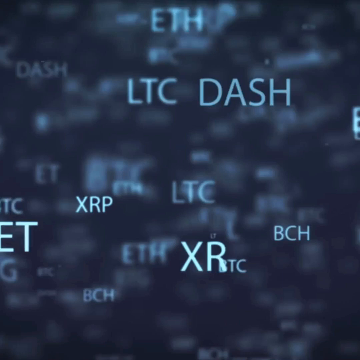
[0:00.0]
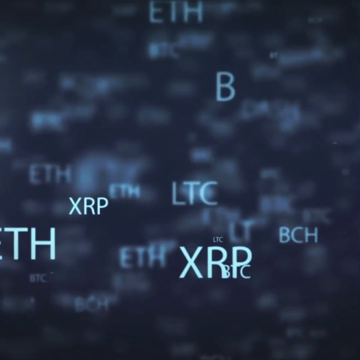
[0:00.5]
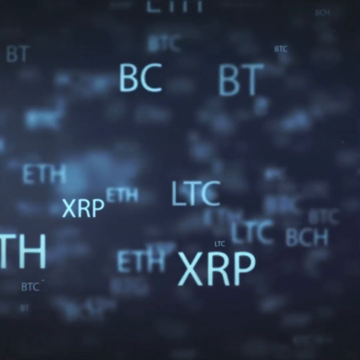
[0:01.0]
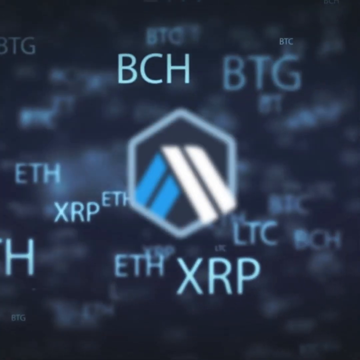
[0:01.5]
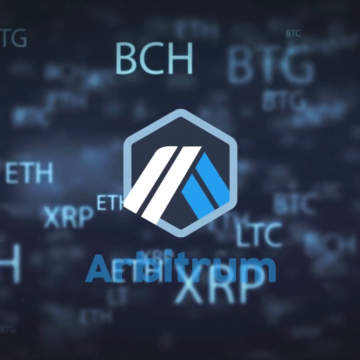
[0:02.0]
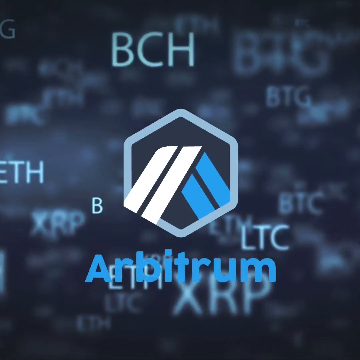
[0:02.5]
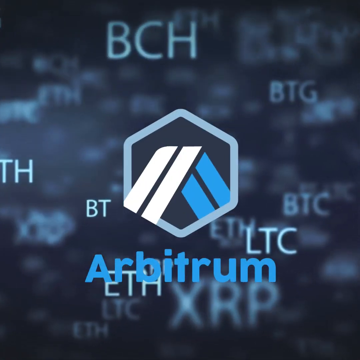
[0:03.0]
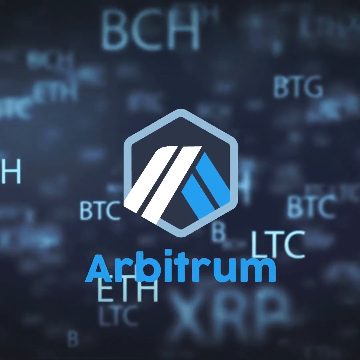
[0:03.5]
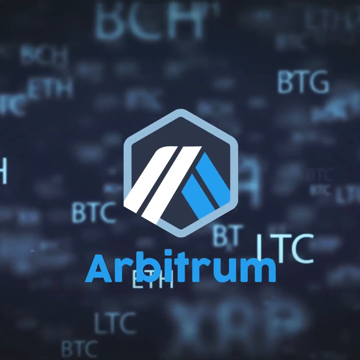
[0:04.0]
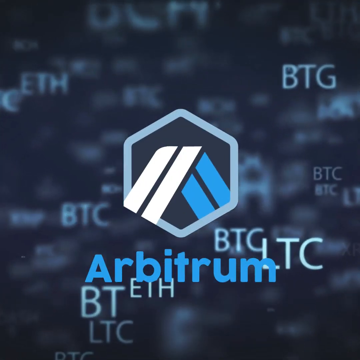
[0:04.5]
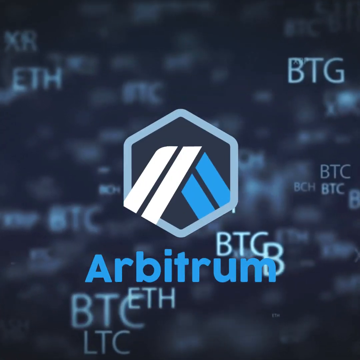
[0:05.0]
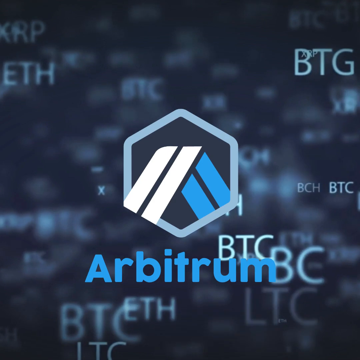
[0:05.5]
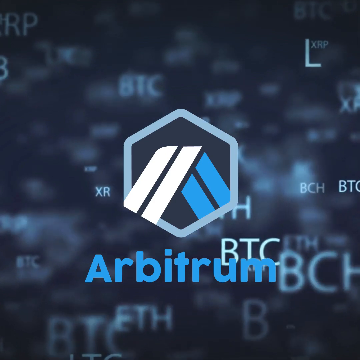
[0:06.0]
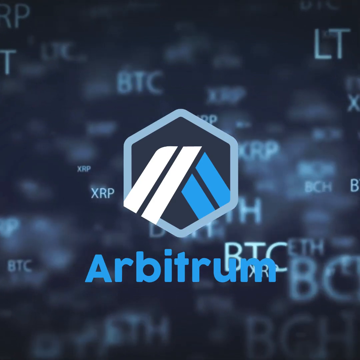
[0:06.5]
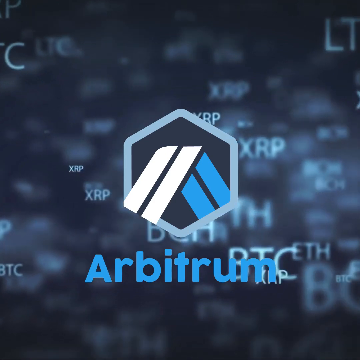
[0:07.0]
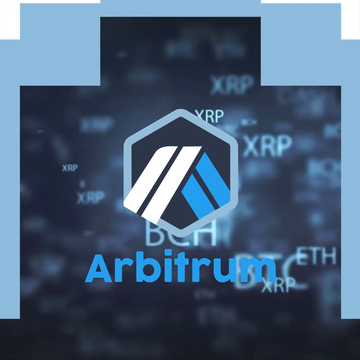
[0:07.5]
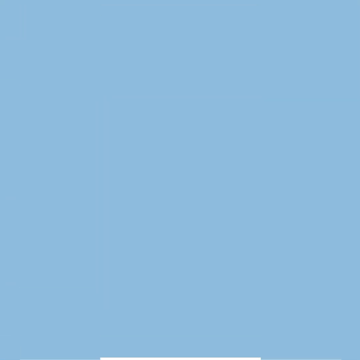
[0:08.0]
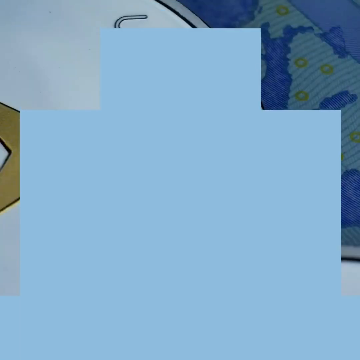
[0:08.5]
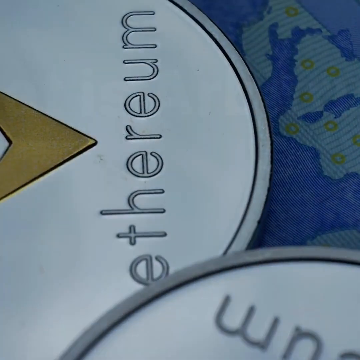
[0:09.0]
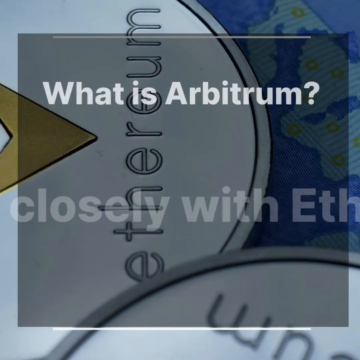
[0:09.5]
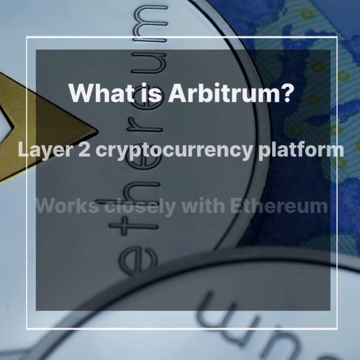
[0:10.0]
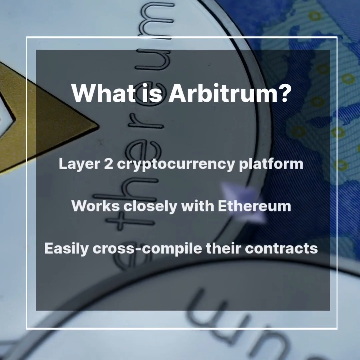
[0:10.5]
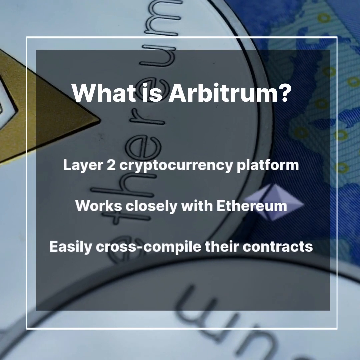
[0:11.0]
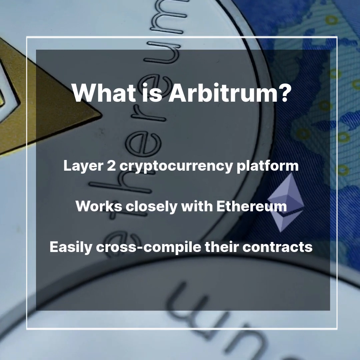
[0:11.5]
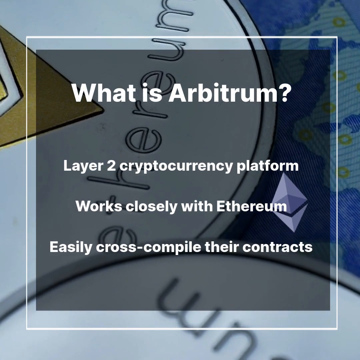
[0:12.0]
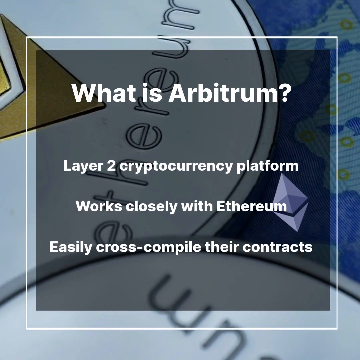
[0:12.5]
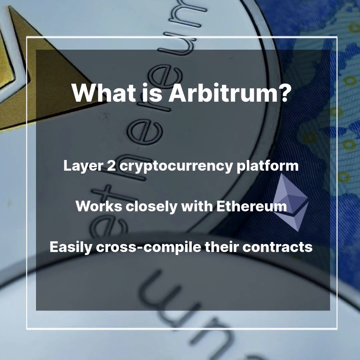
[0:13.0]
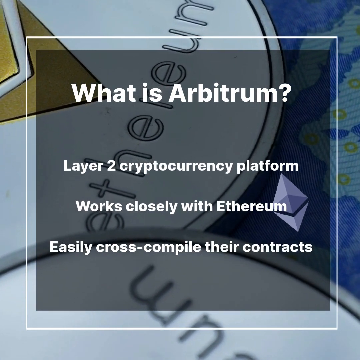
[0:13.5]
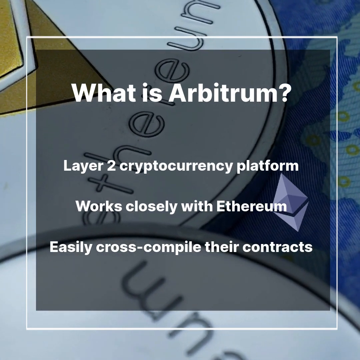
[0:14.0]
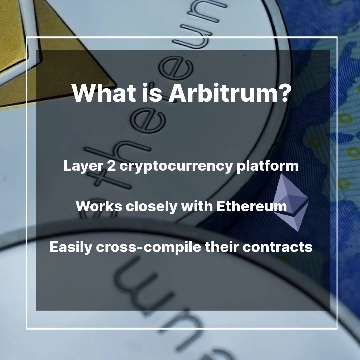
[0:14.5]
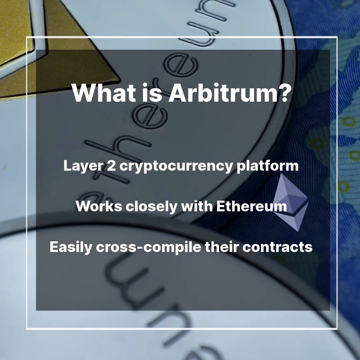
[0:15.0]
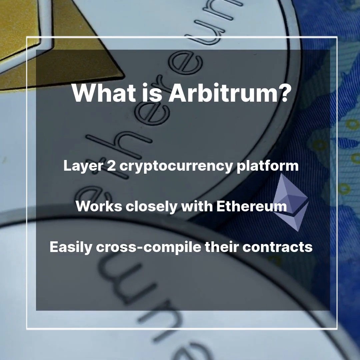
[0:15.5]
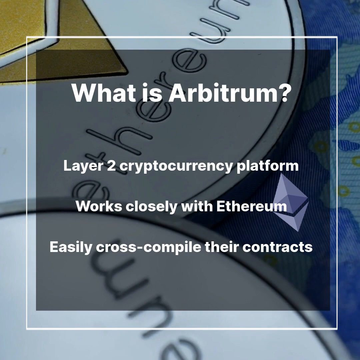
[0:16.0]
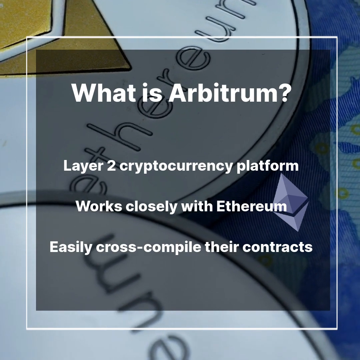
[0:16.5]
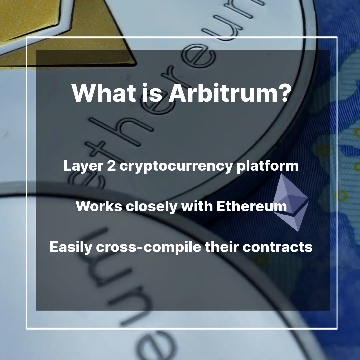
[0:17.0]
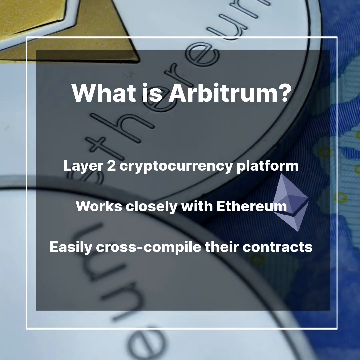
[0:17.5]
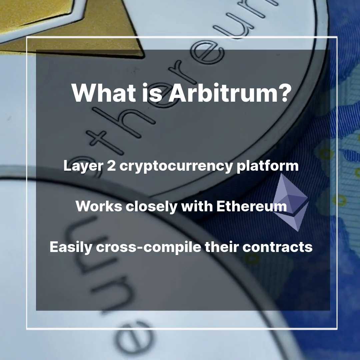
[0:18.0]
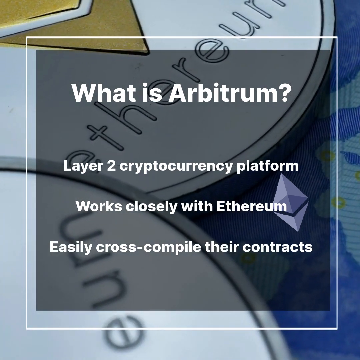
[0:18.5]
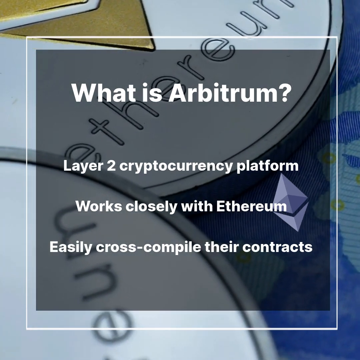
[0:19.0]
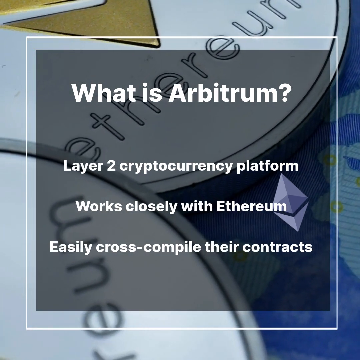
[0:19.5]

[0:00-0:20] Text about LTC appears alongside a symbol, and a lot of different letters such as BTC surround a symbol in the middle. Blue letters and words pop up on the screen, fading in and out. The name "Arbitrum" appears, followed by the text "What is Arbitrum? Layer 2 cryptocurrency platform works closely with Ethereum. Easily cross-compile their contracts." In the background, a spinning coin says "Ethereum".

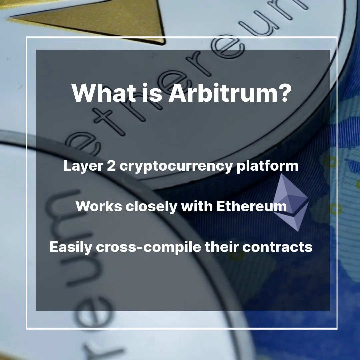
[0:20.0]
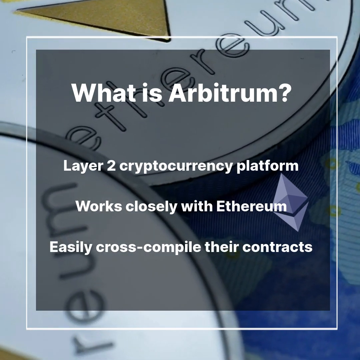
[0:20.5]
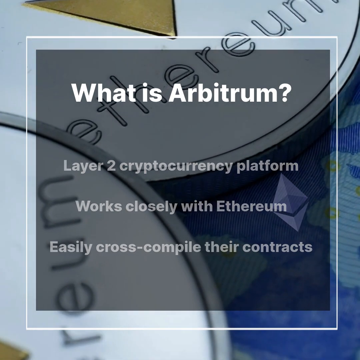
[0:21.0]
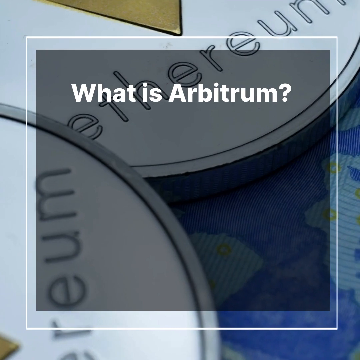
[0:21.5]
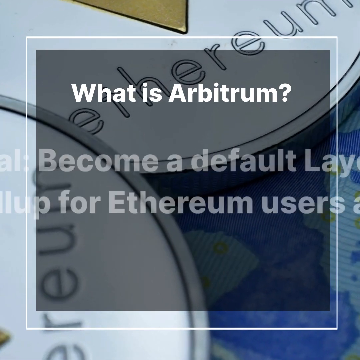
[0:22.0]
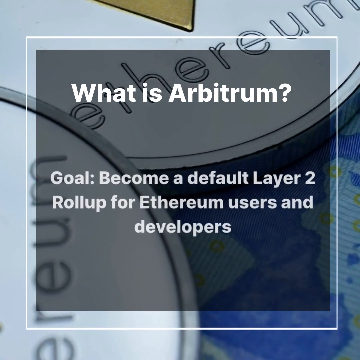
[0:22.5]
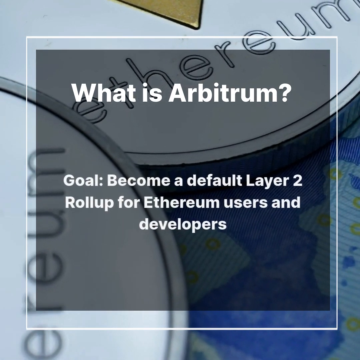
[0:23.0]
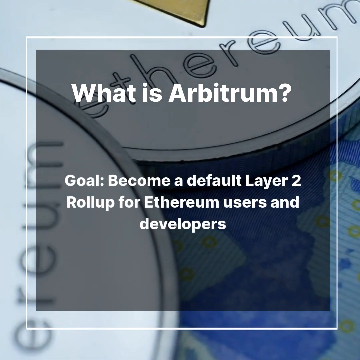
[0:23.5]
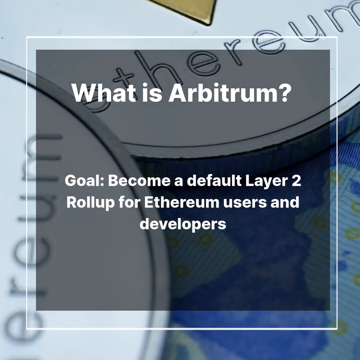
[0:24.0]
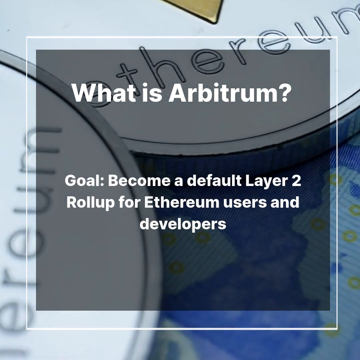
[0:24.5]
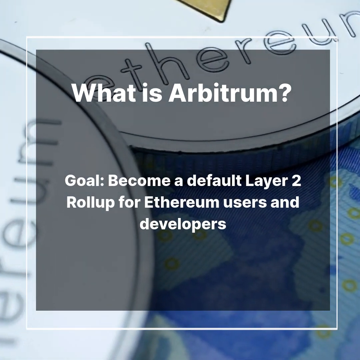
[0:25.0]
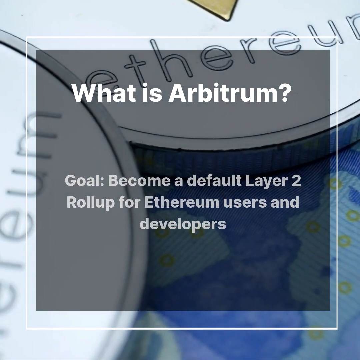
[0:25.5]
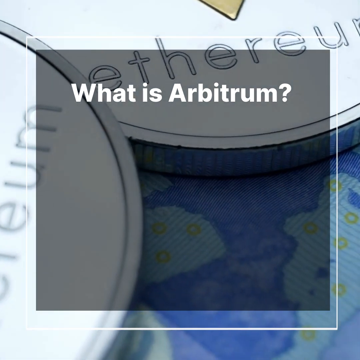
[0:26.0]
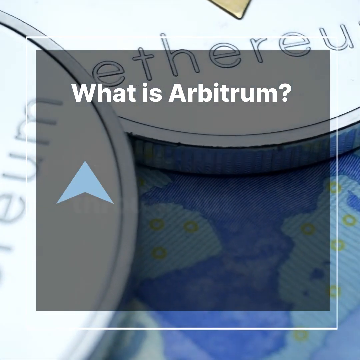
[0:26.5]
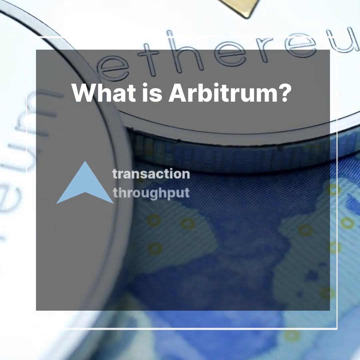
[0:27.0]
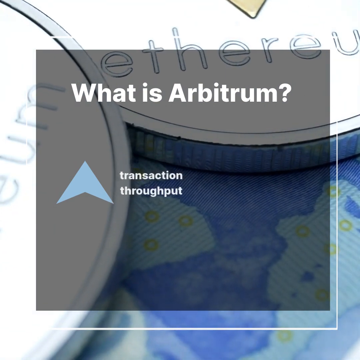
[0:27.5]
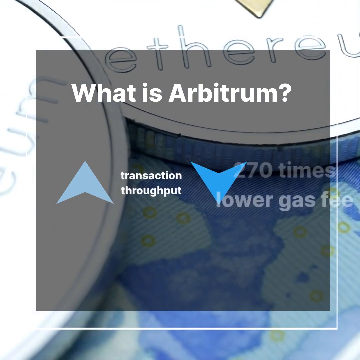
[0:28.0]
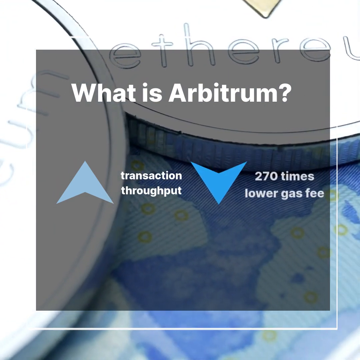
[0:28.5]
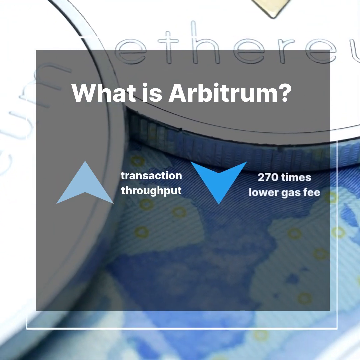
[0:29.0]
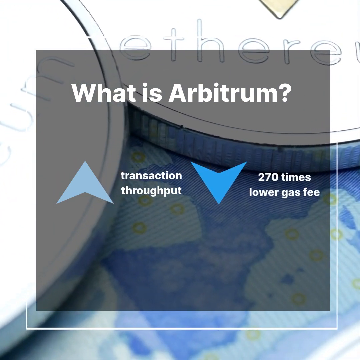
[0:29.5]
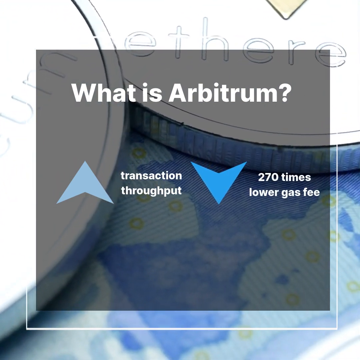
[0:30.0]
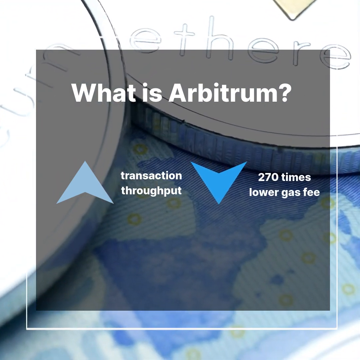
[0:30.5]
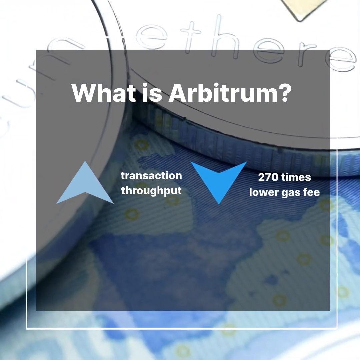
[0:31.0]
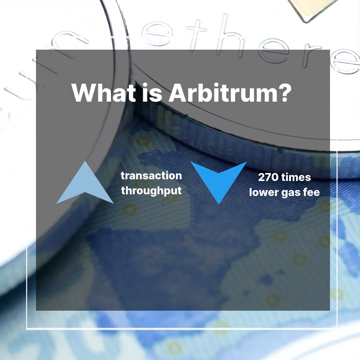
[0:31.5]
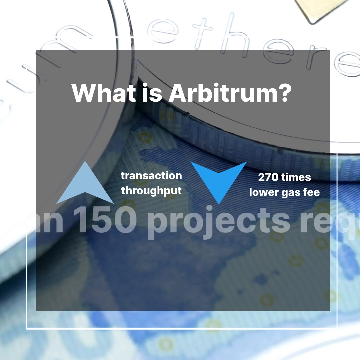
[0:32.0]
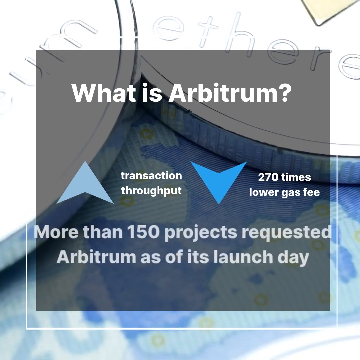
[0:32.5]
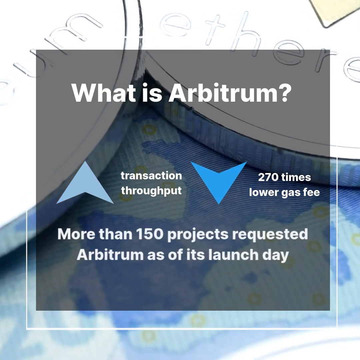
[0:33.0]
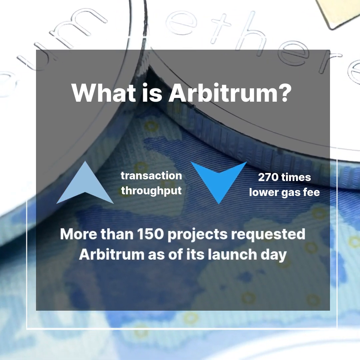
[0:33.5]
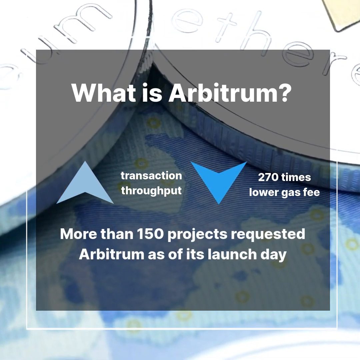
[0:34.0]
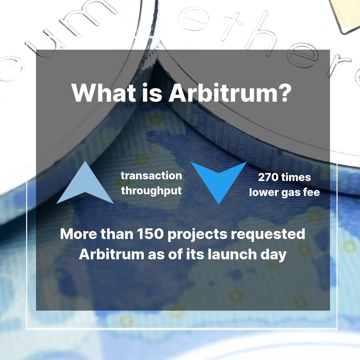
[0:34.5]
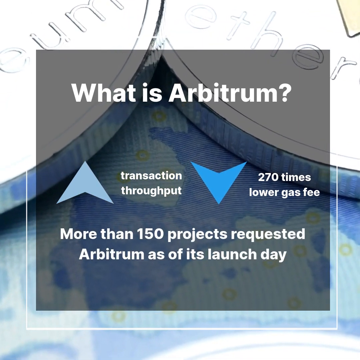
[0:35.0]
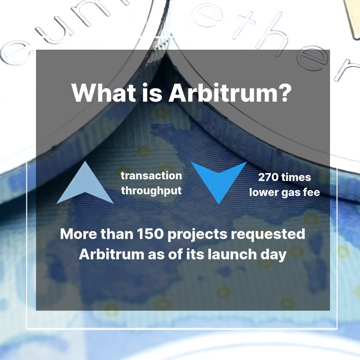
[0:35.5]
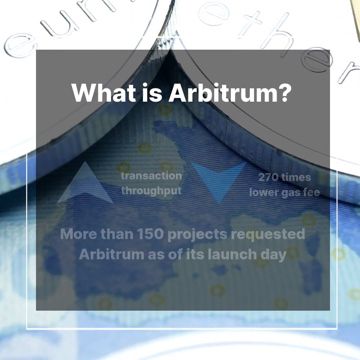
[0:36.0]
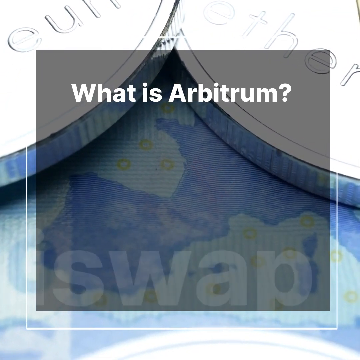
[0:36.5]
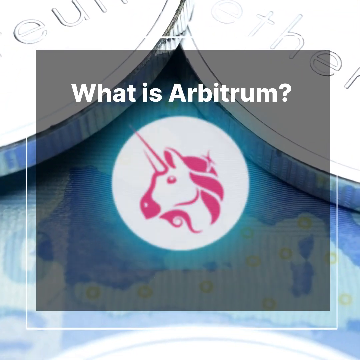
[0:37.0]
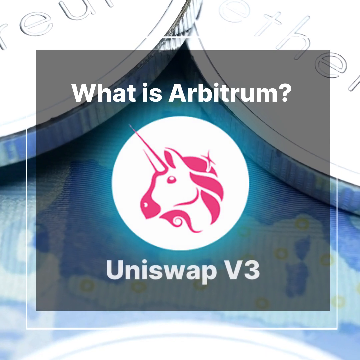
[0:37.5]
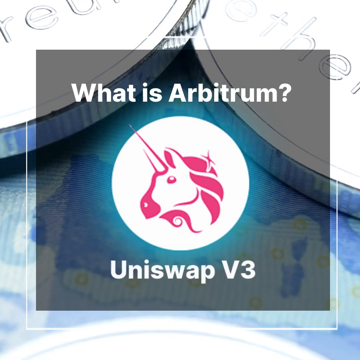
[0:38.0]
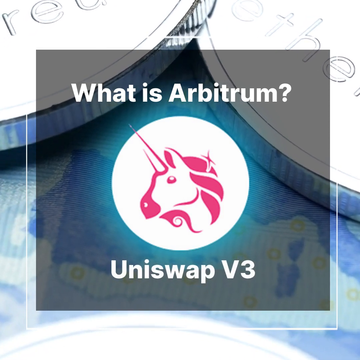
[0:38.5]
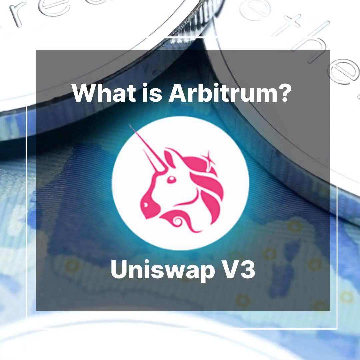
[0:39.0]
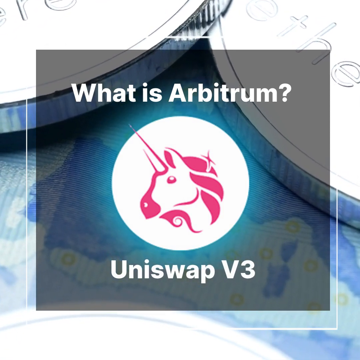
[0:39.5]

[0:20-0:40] The text "What is Arbitrum" appears, spelled A-R-B-I-T-R-U-M, followed by "Layer 2 cryptocurrency platform works closely with Ethereum. Easily cross-compile their contracts." An Ethereum coin is in the background and moves. Next the screen reads "What is Arbitrum? Goal: become a default layer 2 rollup for Ethereum users and developers." Then it says "transactional throughput" and "270 times lower gas fee", followed by "more than 150 projects requested Arbitrum as of this launch day." Before the shot ends, a symbol appears, possibly an Arbitrum symbol: a white circle with a pink unicorn head in the middle, and the text "UNISWAPV3".